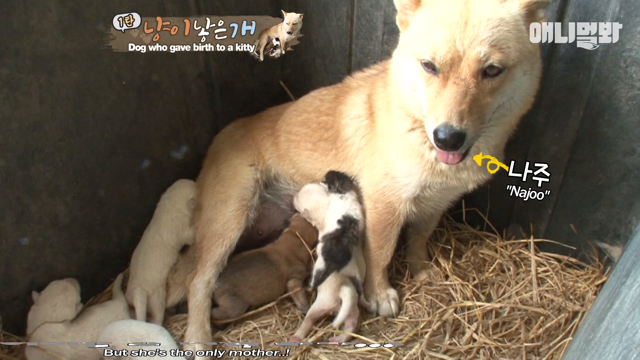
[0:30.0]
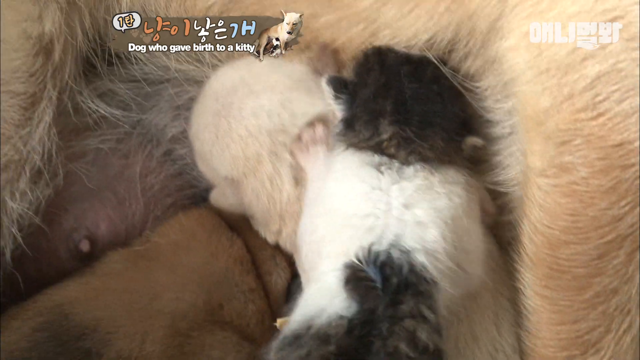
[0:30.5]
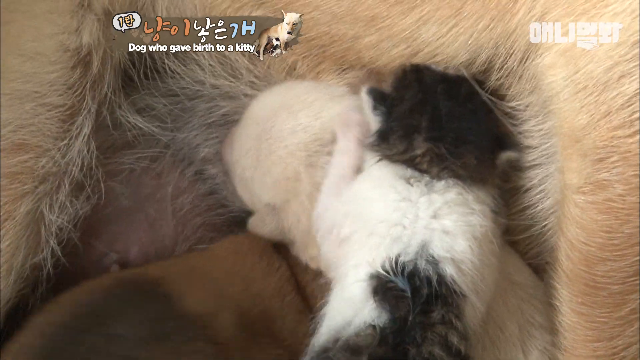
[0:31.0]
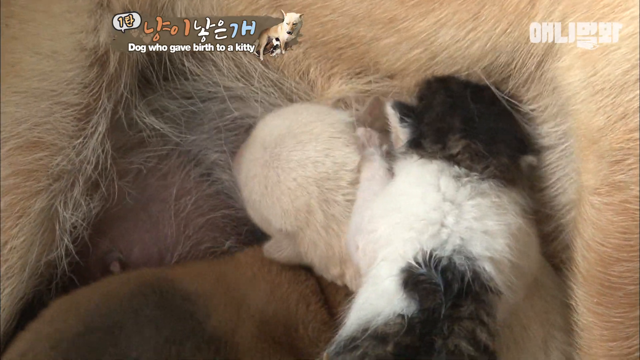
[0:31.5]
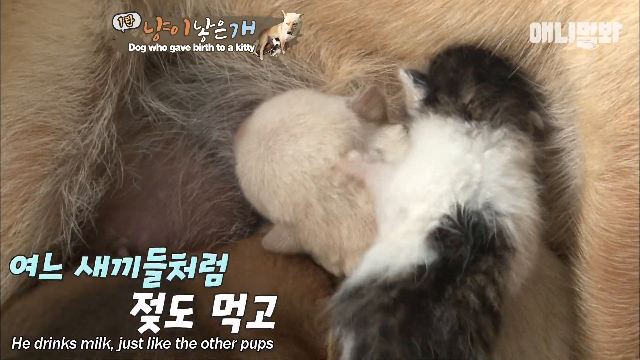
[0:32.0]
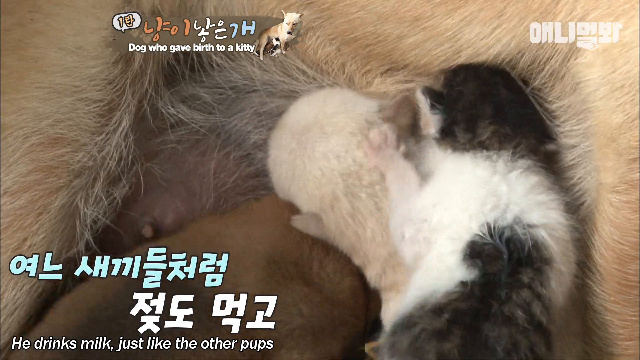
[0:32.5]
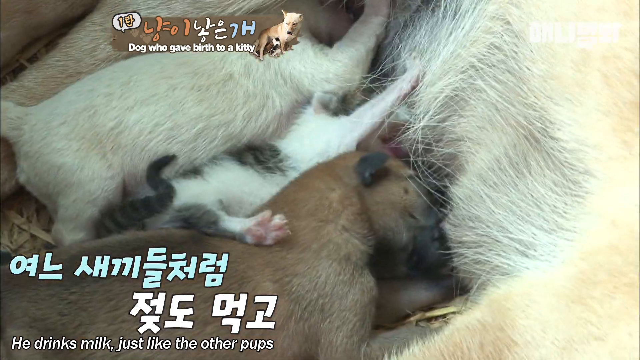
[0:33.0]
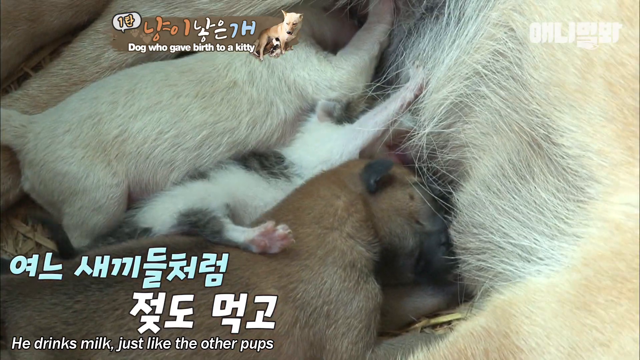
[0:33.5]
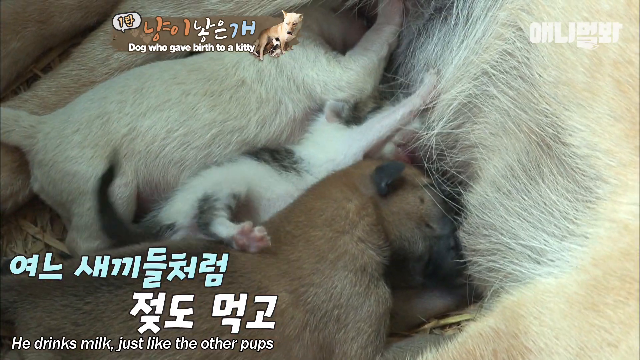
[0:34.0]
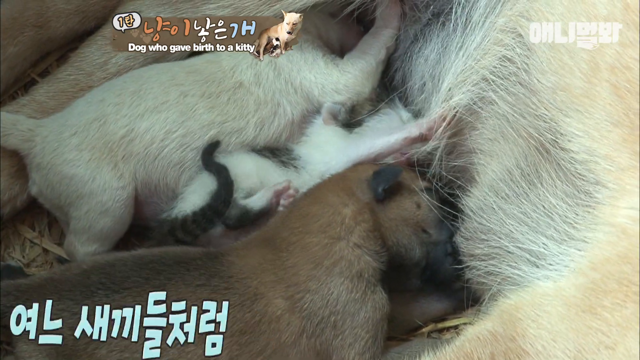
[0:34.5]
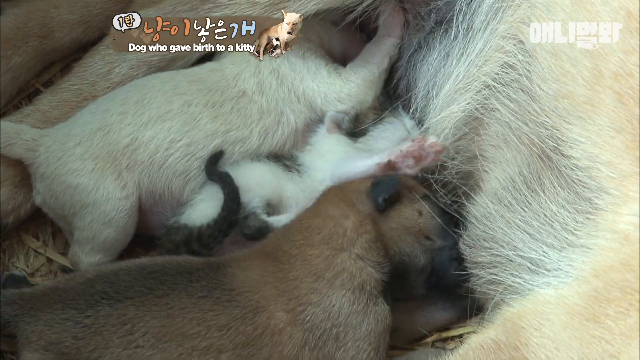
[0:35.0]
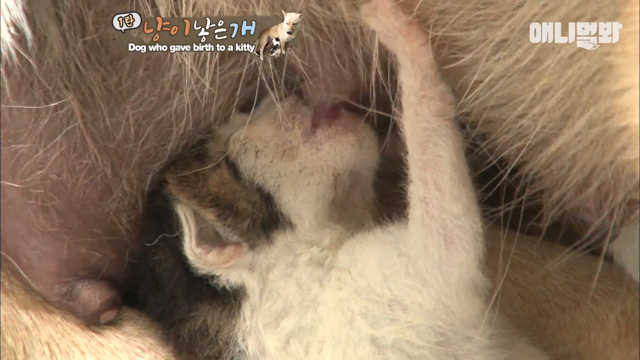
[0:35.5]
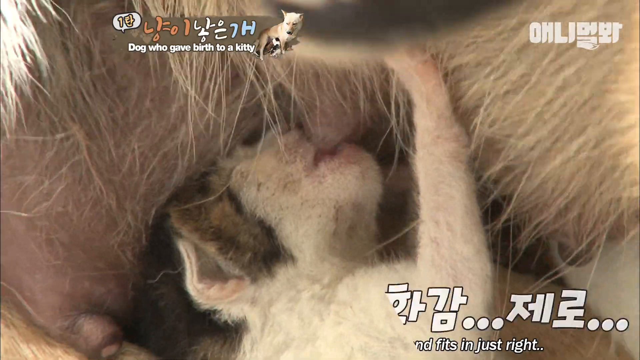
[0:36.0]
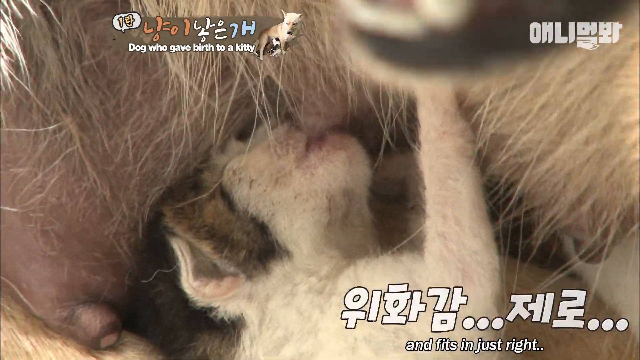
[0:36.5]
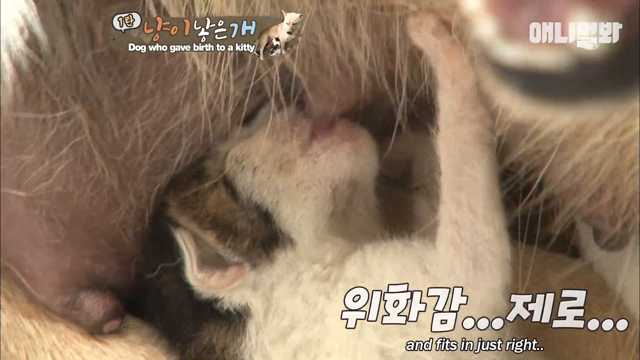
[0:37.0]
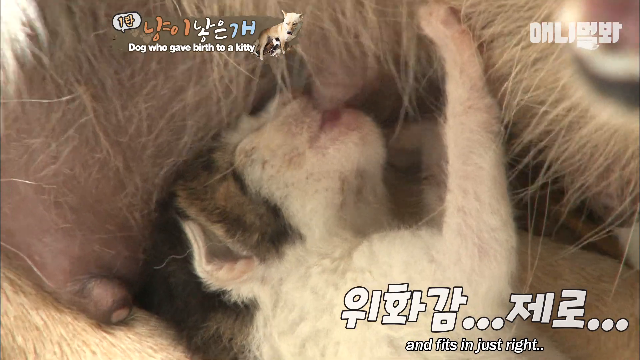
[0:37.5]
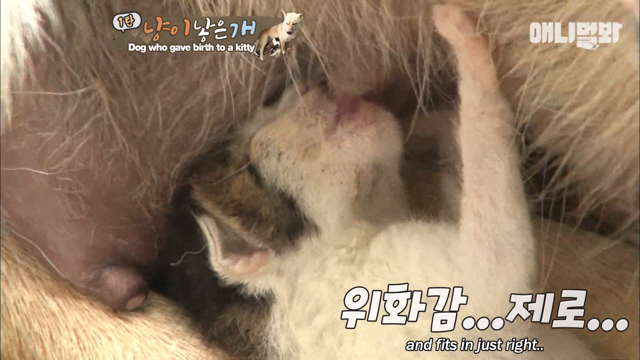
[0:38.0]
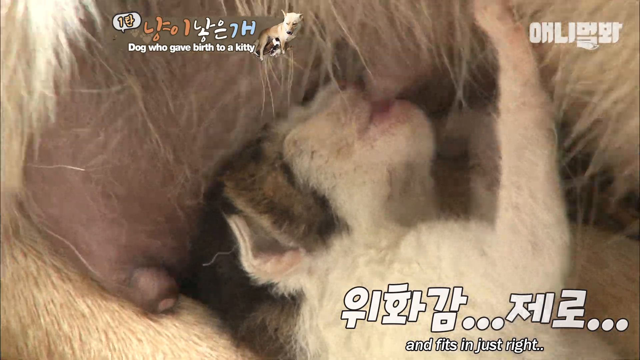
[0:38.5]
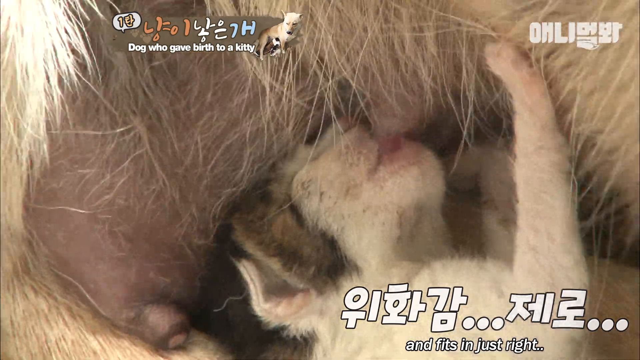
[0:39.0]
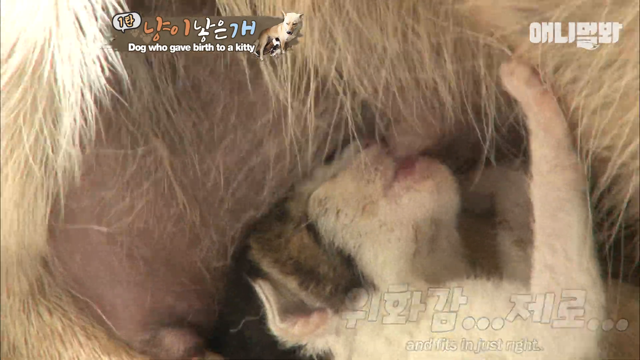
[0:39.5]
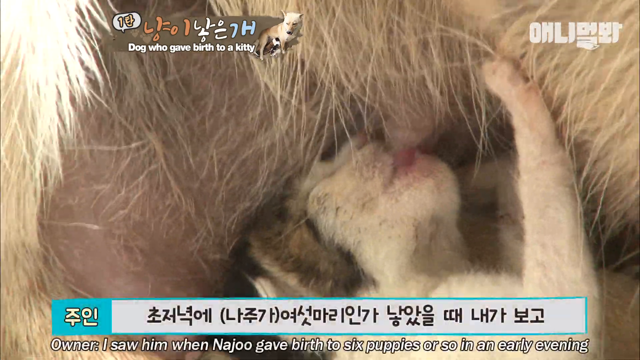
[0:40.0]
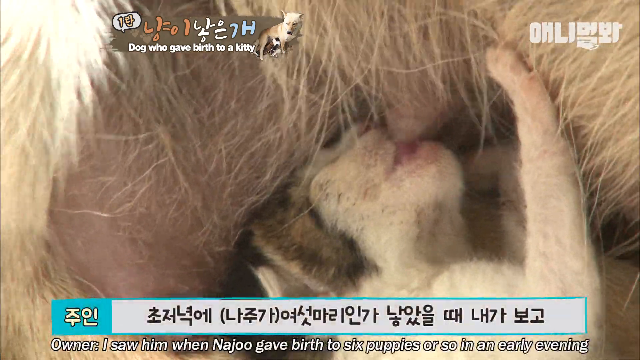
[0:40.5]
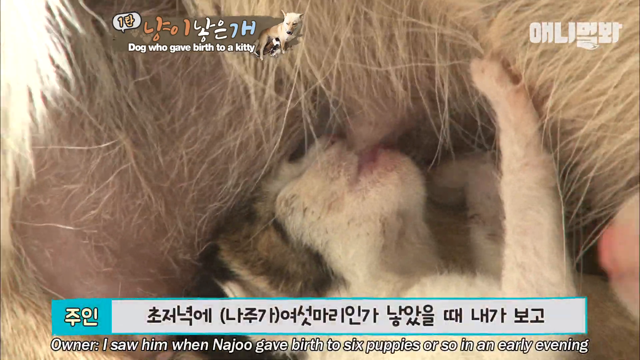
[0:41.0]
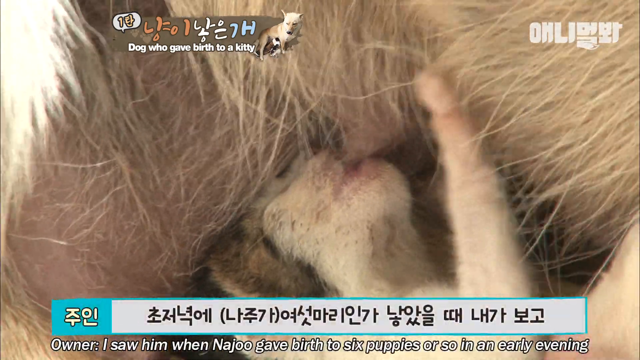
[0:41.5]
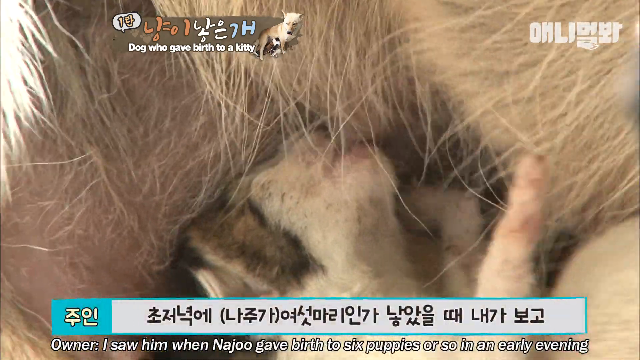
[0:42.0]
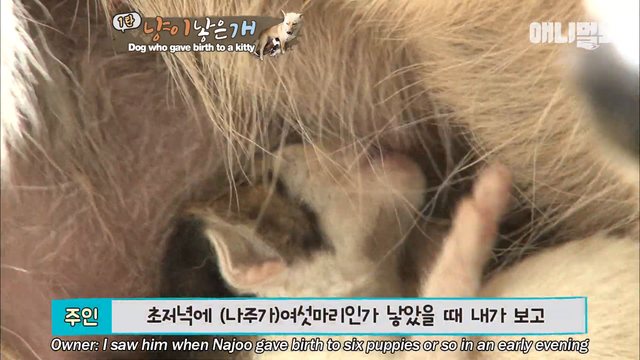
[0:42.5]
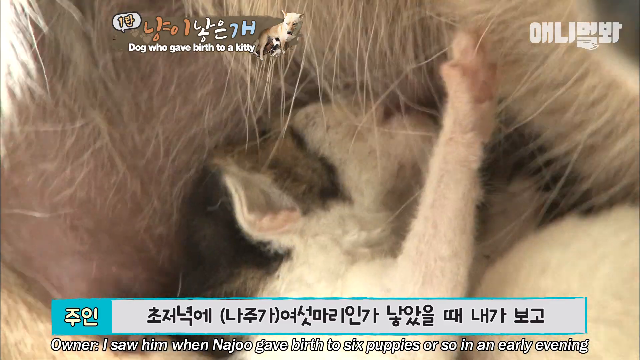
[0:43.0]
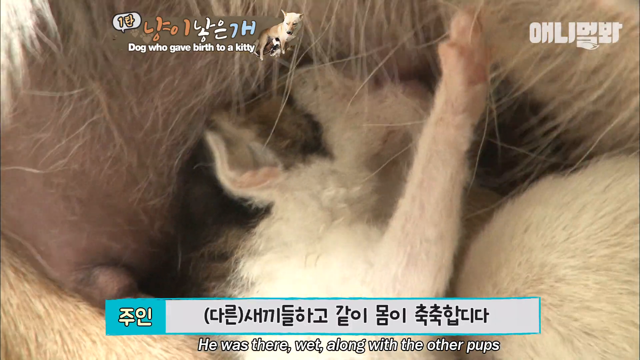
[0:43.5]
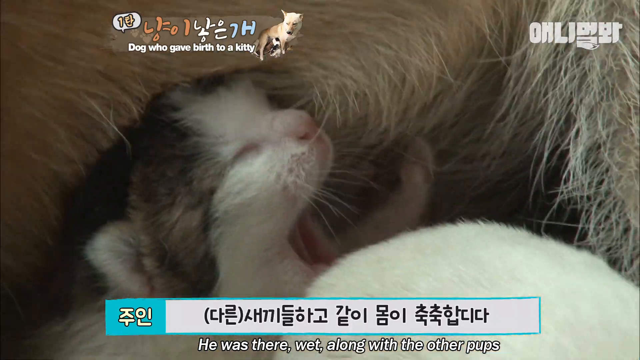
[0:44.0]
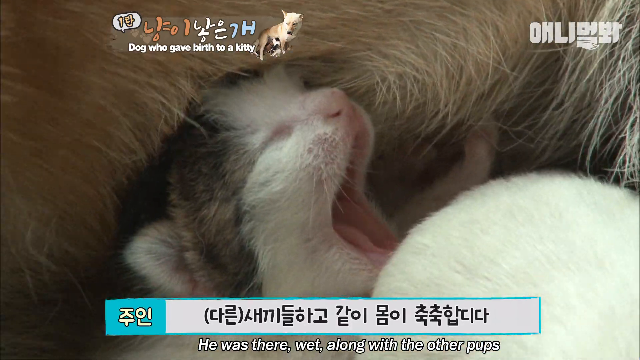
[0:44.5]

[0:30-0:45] What appear to be several puppies and a kitten are next to an adult dog, presumably their mother. The puppies and the kitten seem to be feeding off the adult dog, and the video shows this feeding from different angles and viewpoints as they lie next to the mother. They are in what appears to be straw bedding in an enclosure of sorts. At one point the cat yawns and looks tired. Chinese and English subtitles describe what is happening. There are two rows of Chinese subtitles, one at the top and one at the bottom of the frame, which change as the video progresses.